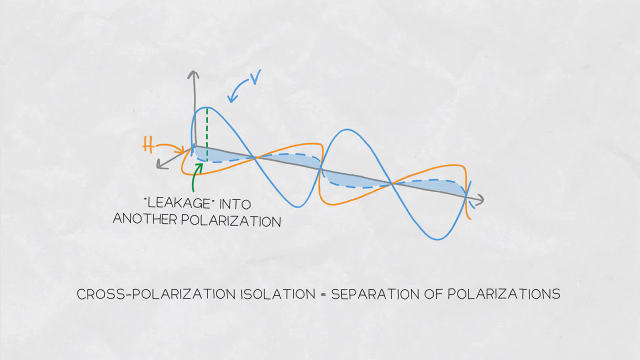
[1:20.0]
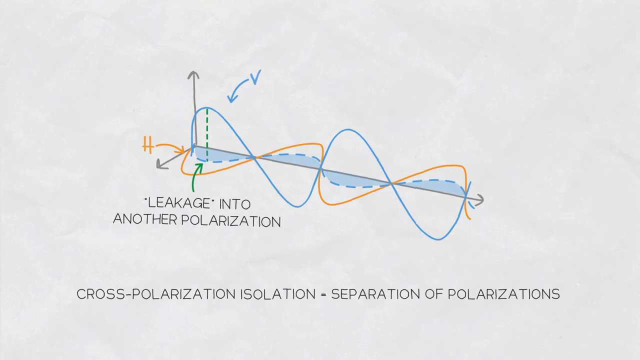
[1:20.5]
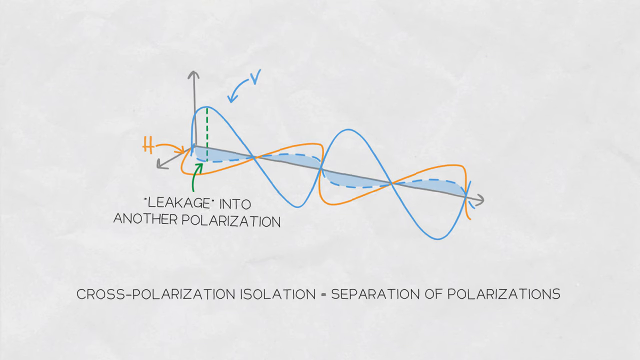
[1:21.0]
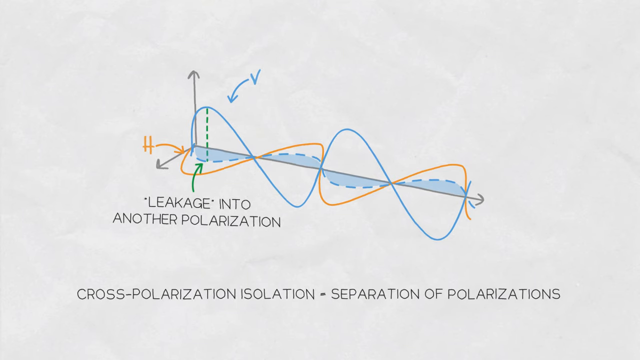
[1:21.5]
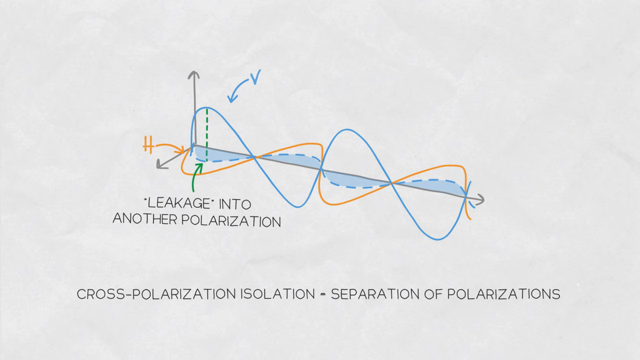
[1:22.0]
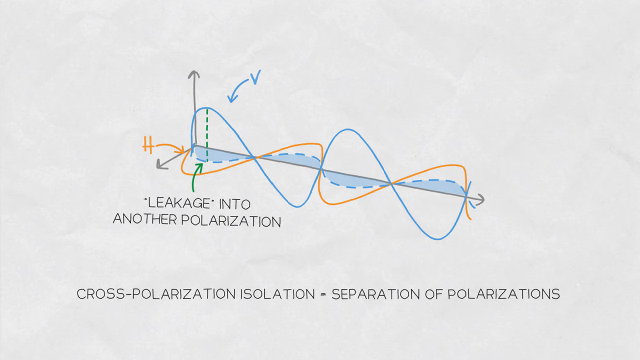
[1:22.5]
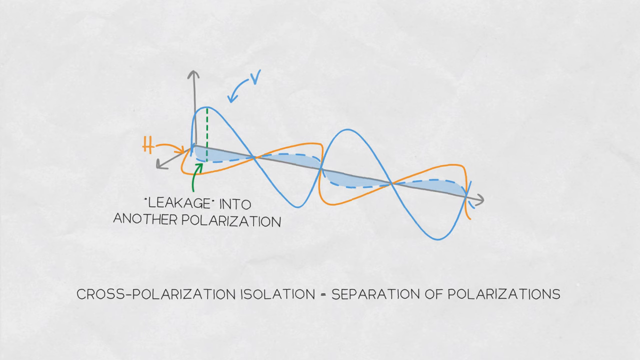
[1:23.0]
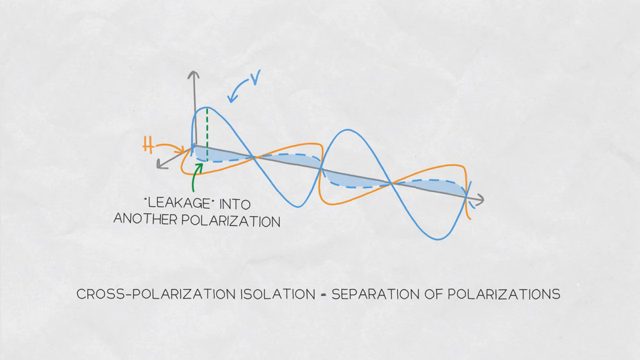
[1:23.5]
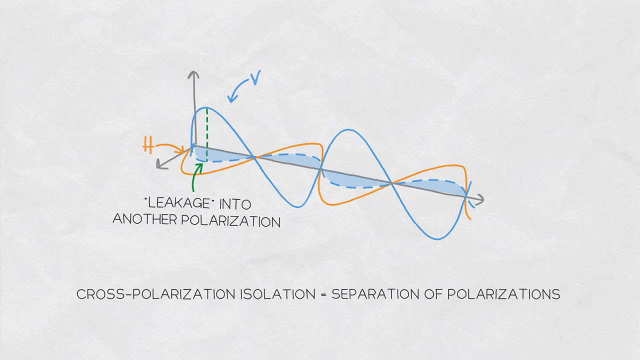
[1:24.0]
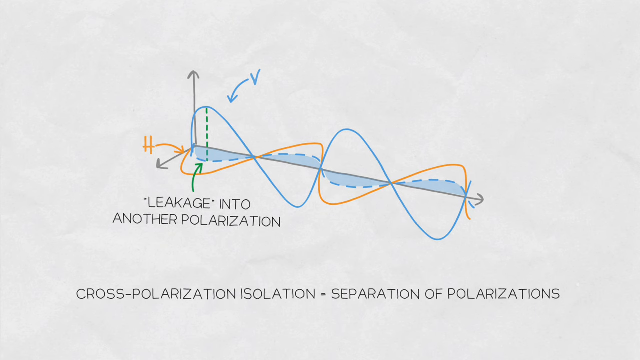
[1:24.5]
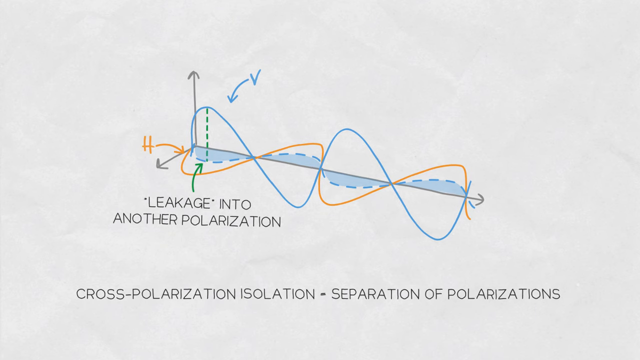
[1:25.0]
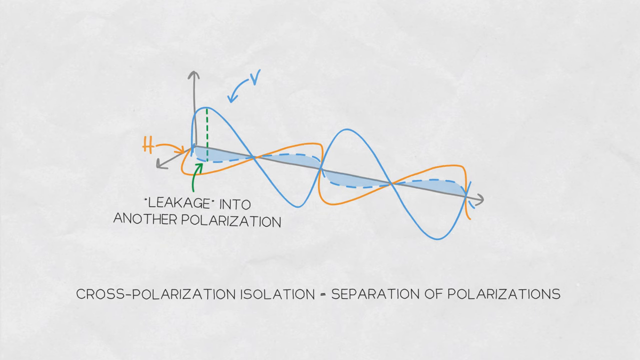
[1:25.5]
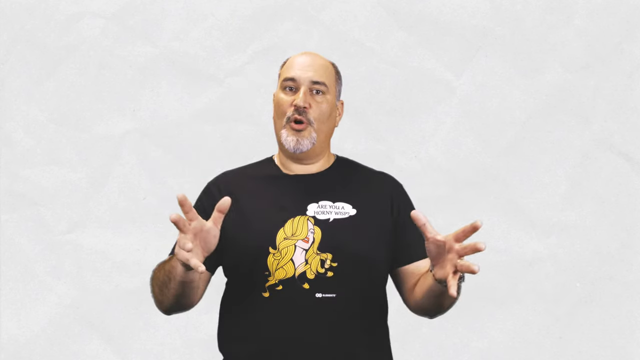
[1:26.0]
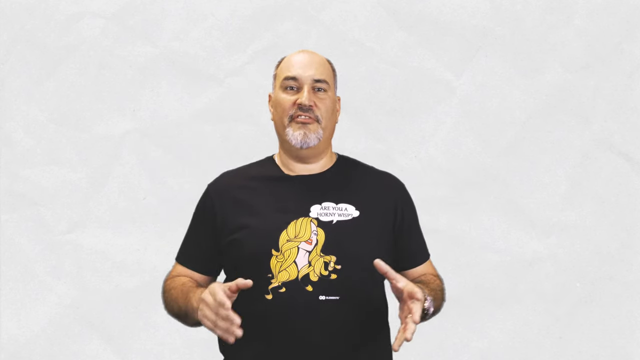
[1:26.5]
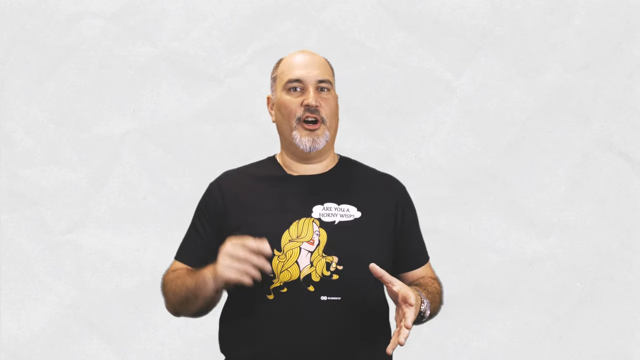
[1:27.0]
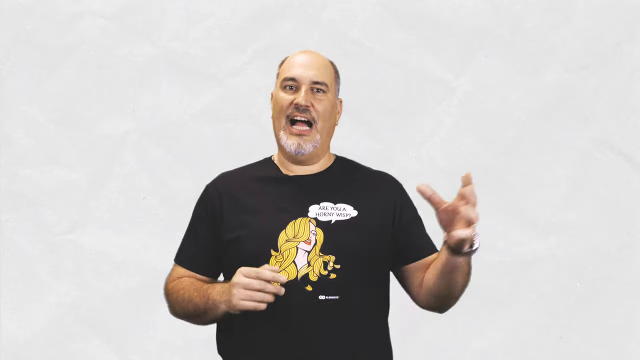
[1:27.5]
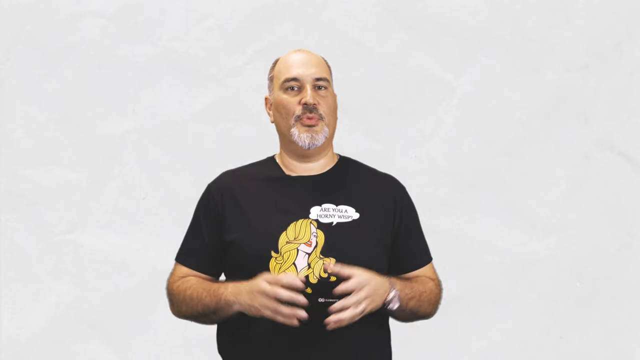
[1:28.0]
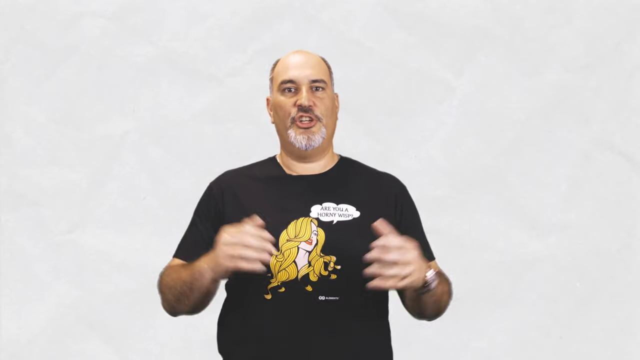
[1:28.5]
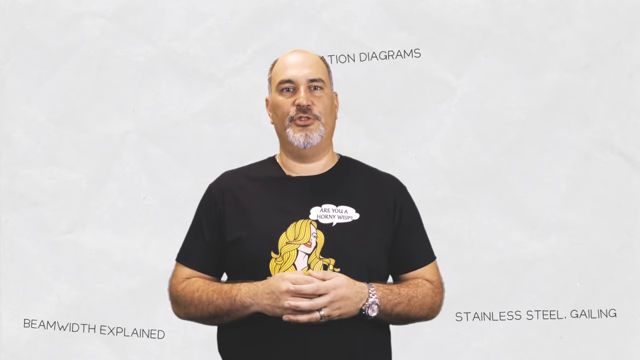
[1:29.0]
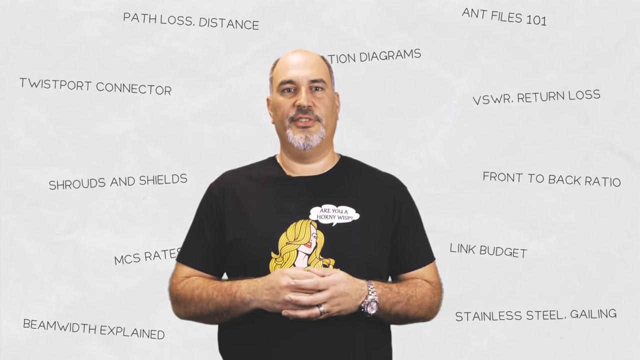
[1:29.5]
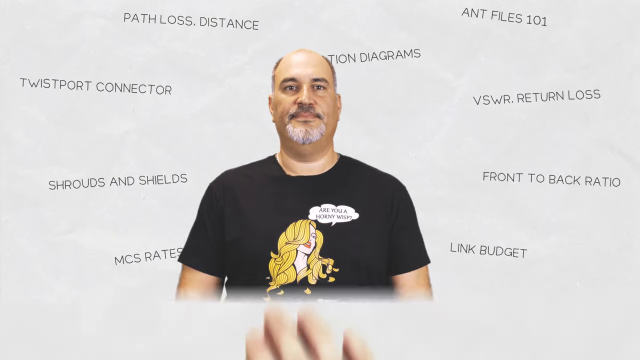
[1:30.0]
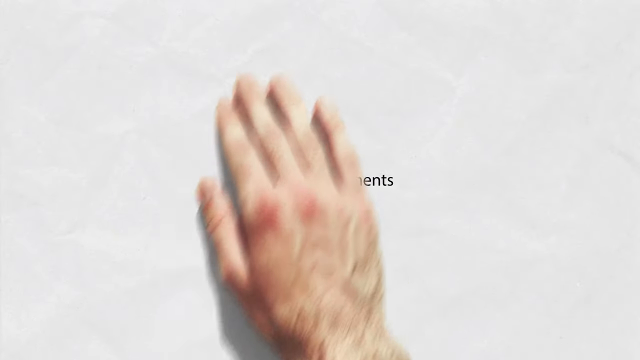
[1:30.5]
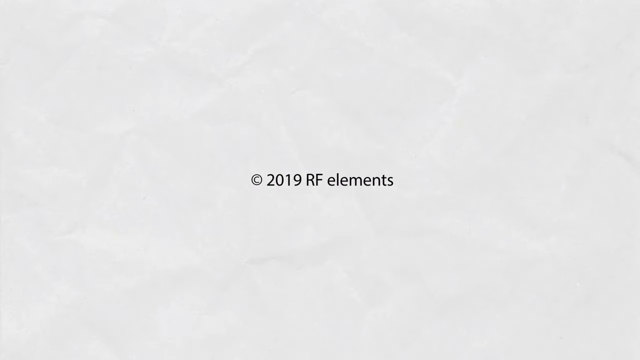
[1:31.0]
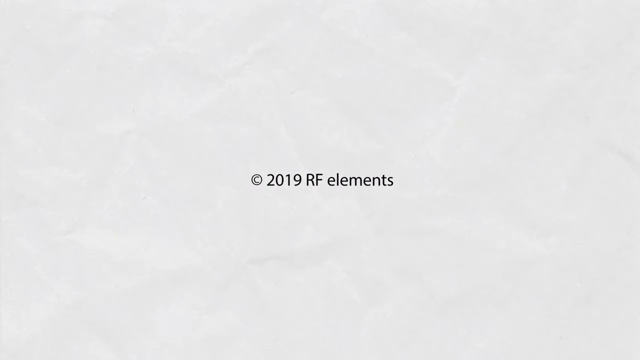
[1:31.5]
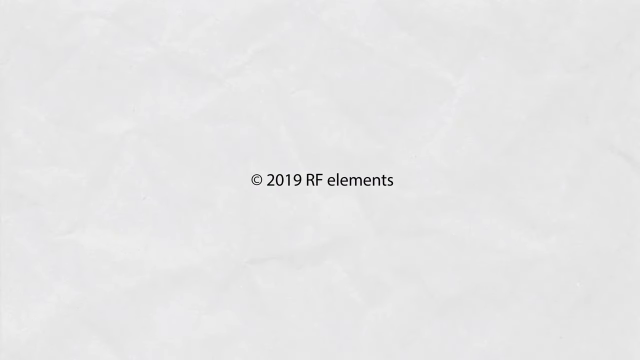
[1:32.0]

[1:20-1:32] A diagram of polarization is shown with the text "leakage into another polarization" written underneath, along with "cross-polarization" and "isolation." Many words appear. At the end of the video, "2019 RF elements" is shown.